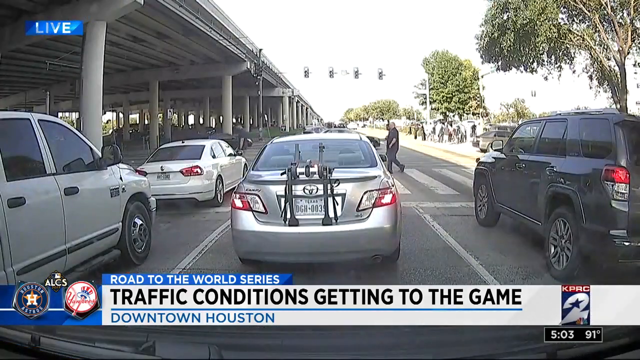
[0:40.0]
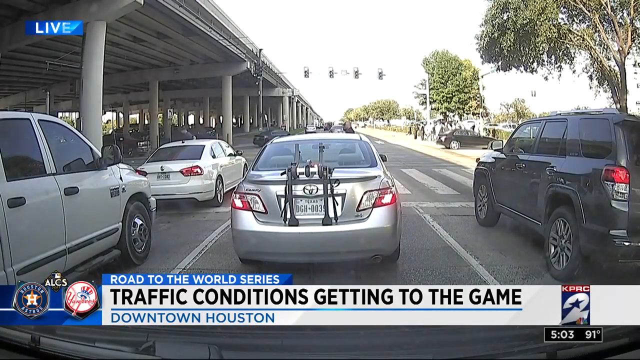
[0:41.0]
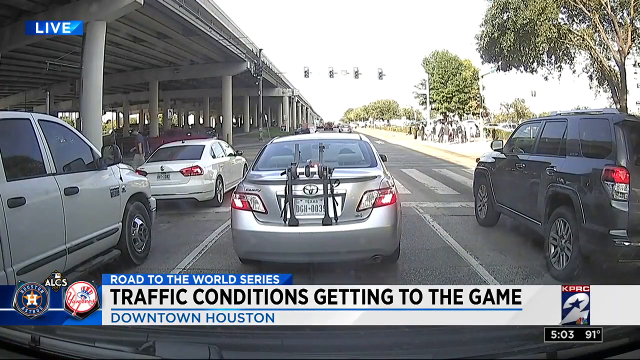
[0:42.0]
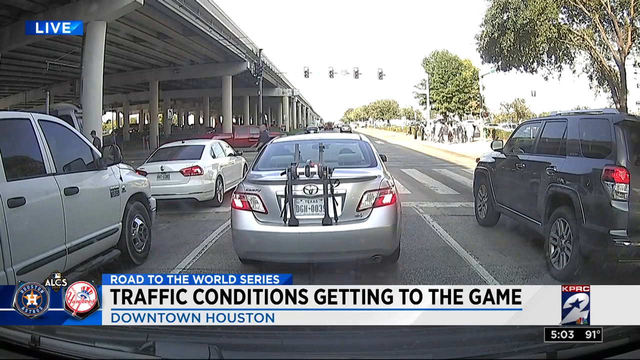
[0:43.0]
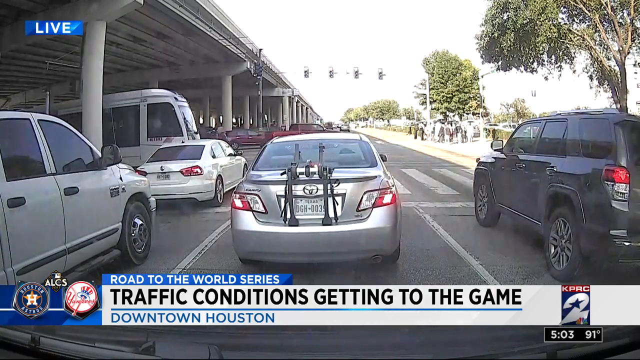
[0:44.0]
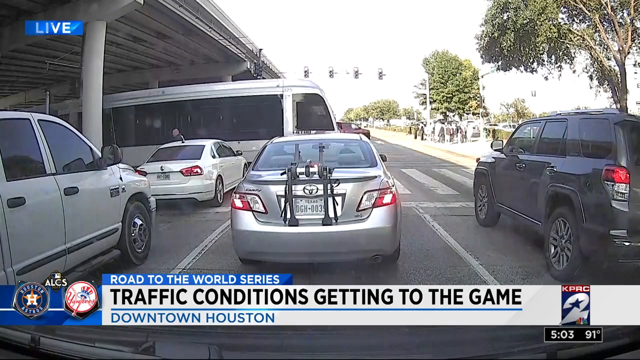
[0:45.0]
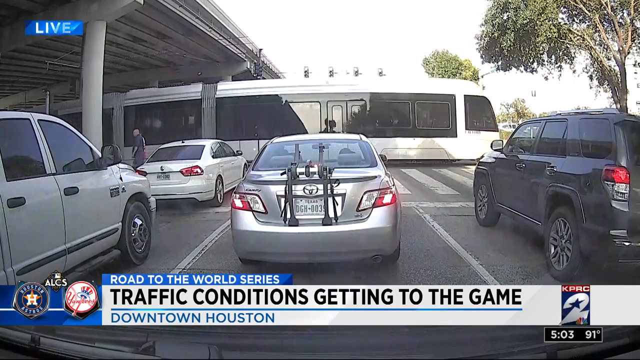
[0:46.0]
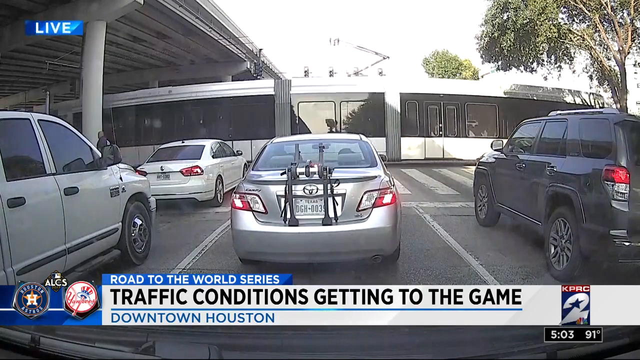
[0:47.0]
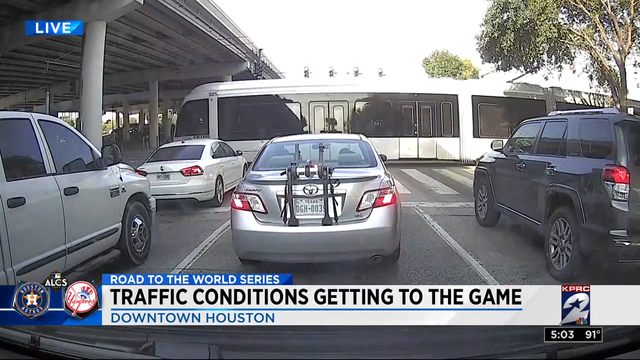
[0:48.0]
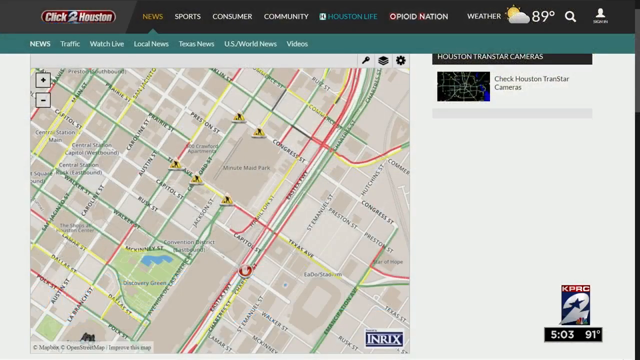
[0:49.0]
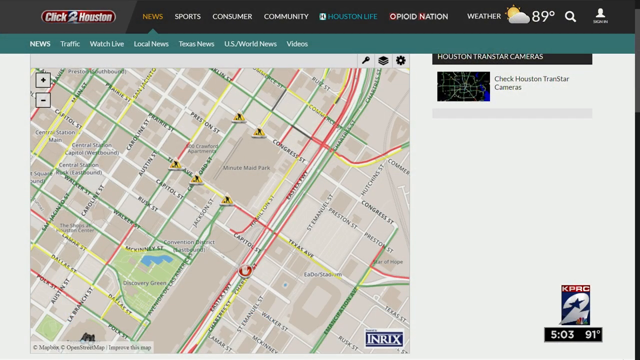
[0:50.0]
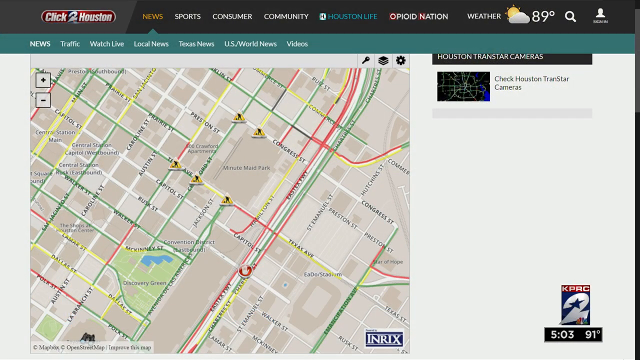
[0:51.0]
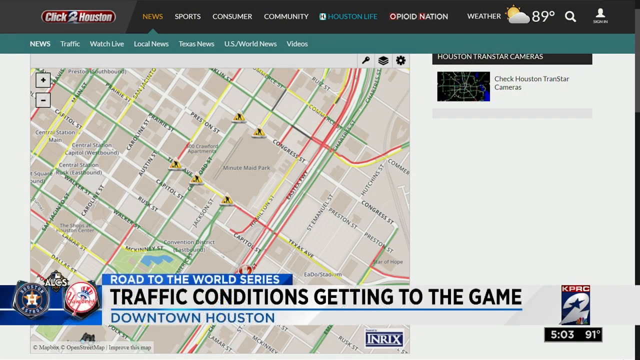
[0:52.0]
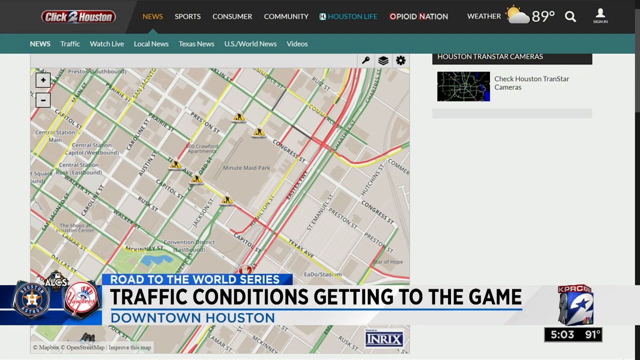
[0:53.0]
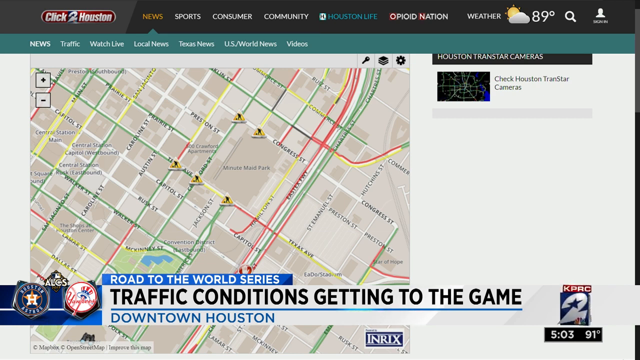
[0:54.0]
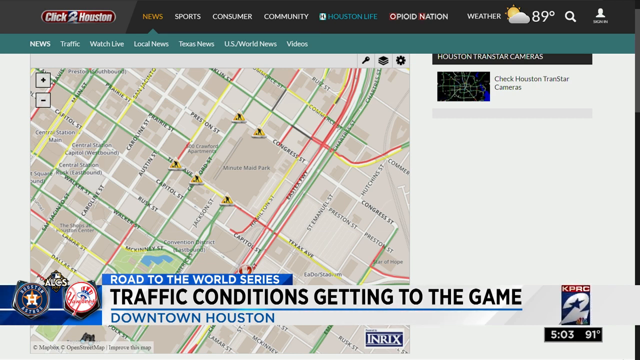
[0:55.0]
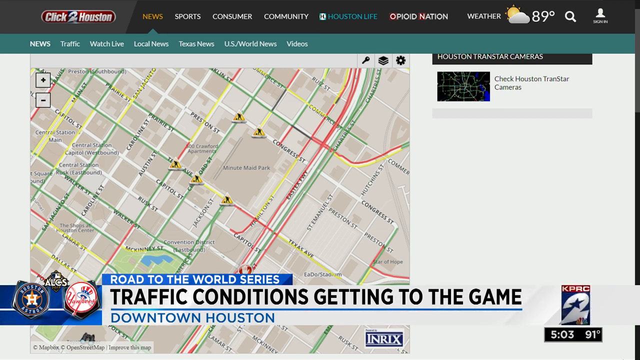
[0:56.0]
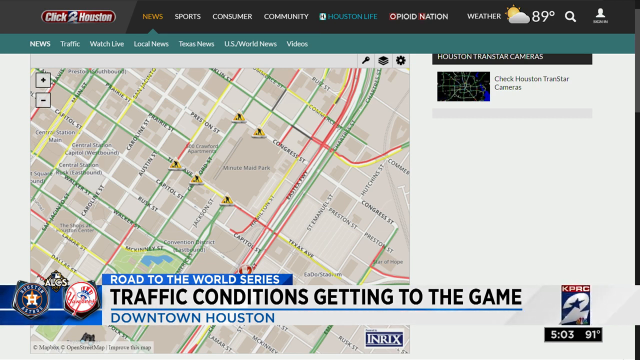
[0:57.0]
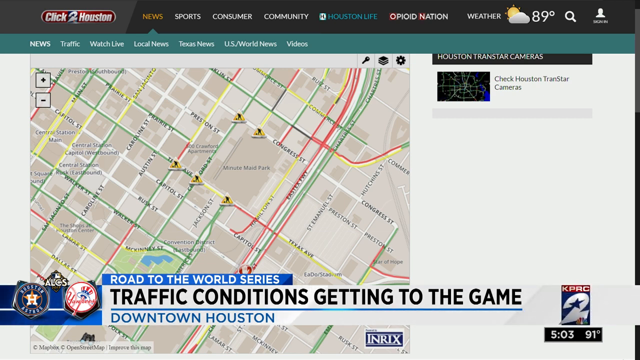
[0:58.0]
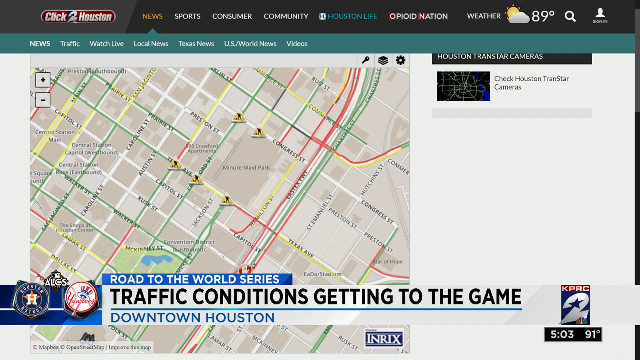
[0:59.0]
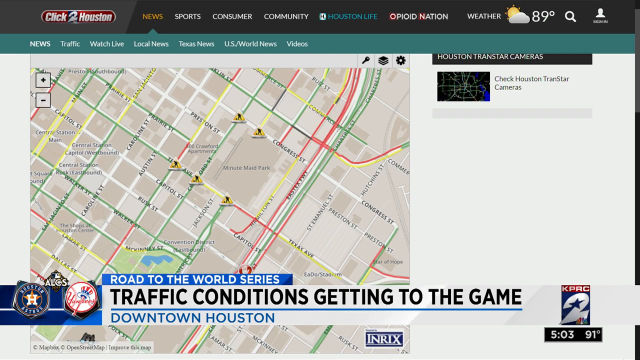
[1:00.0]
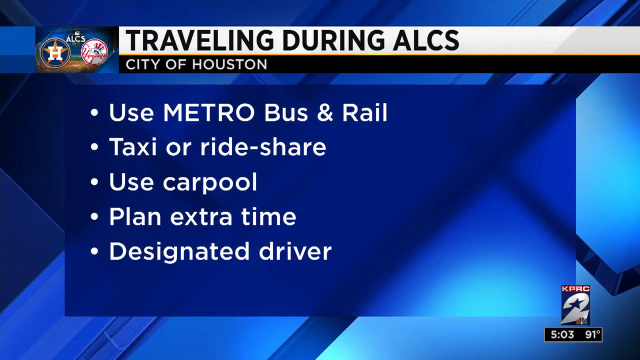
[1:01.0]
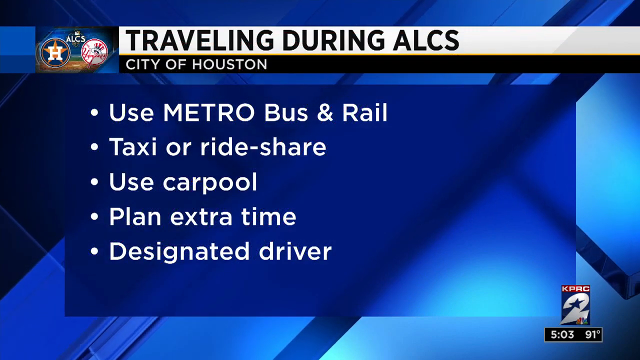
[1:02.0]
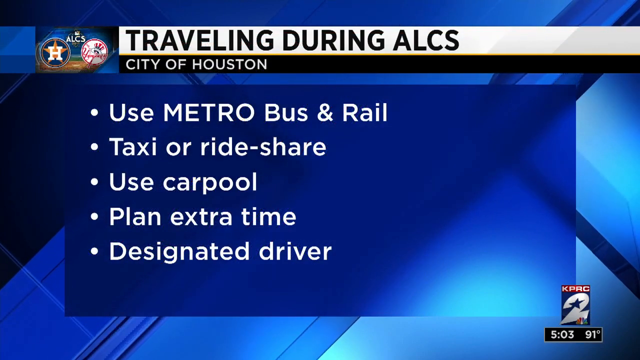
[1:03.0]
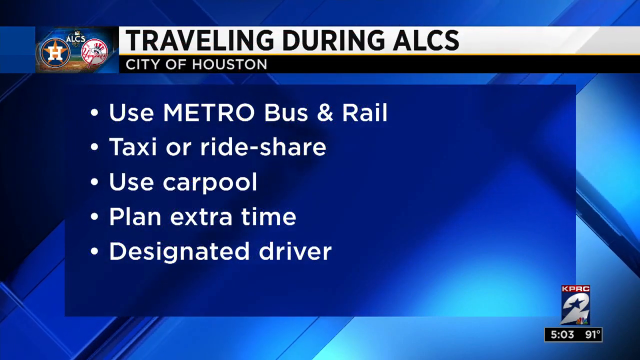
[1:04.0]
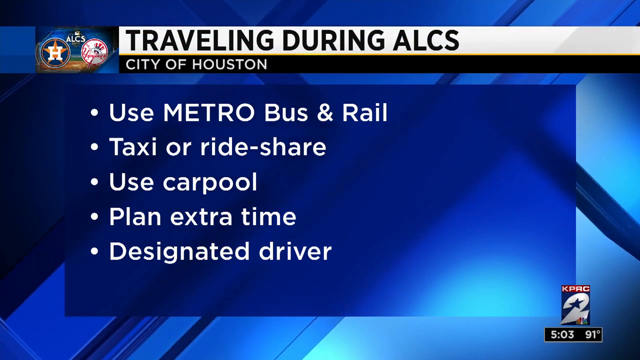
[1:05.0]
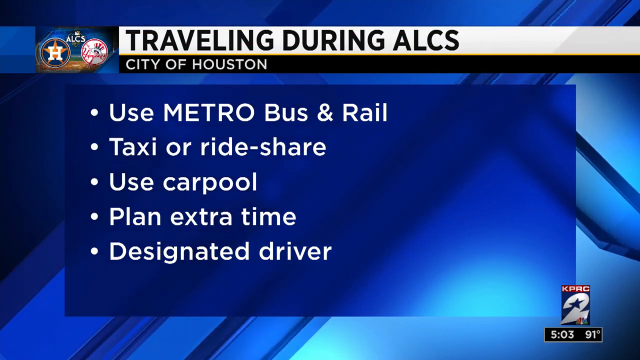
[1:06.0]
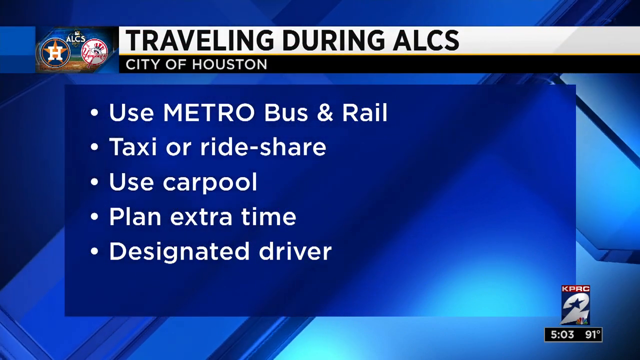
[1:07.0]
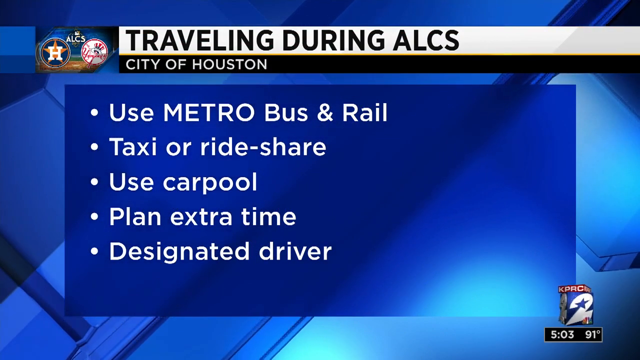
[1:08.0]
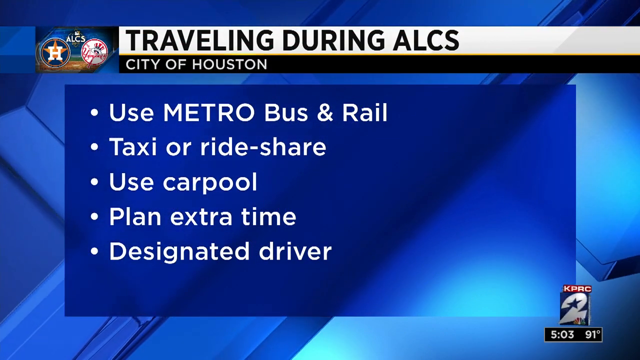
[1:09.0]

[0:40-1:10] The vehicle with the camera is still behind the silver Toyota, waiting for the lights to change, while a tram crosses from left to right. The video then cuts to a computer screen. At the top left it reads "Click to Houston", and across to the right are the menu items "news", "sport", "consumer", "community", "Houston Life", "Opioid Nation" and "weather", which shows 89 degrees and a sun coming out of a cloud. Underneath is a map of roads in different colours, red, green and yellow, with some greenery. The ticker at the bottom reads "traffic conditions get into the game, downtown Houston". The view then changes to a blue screen headed "travel during ALCS, City of Houston". Beneath it are bullet points in white writing on the blue background: "use Metrobus and Rail", "taxi or rideshare", "use carpool", "plan extra time" and "designated driver".